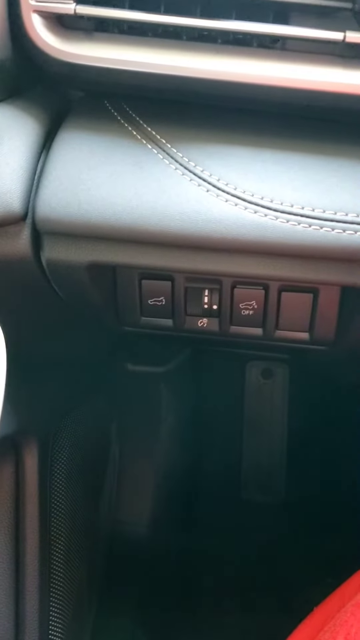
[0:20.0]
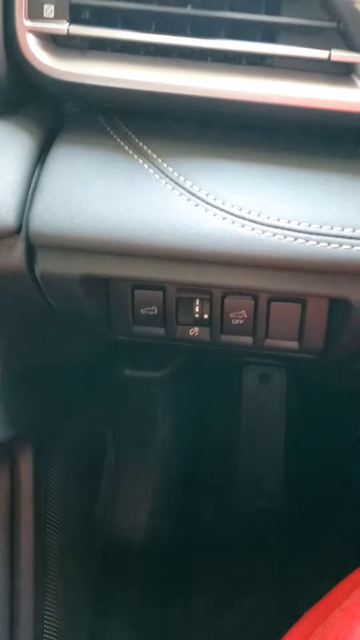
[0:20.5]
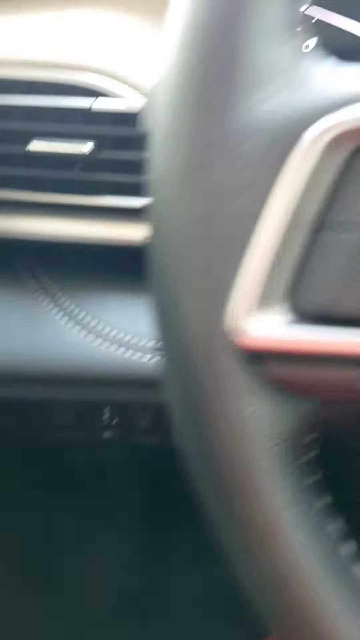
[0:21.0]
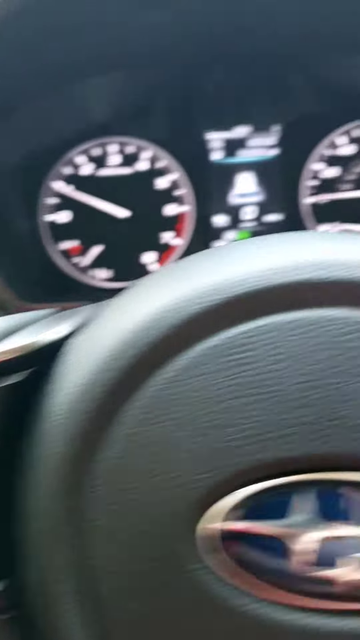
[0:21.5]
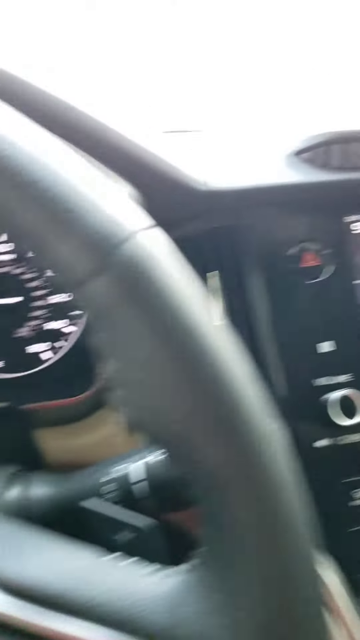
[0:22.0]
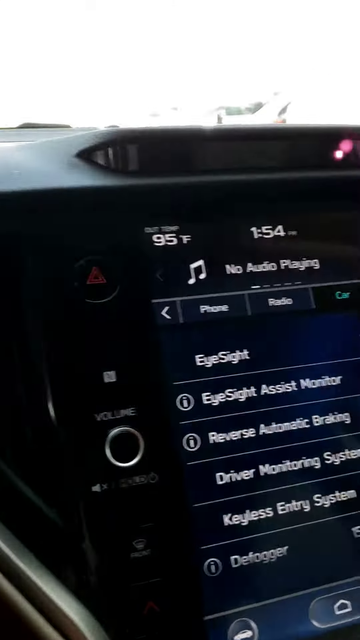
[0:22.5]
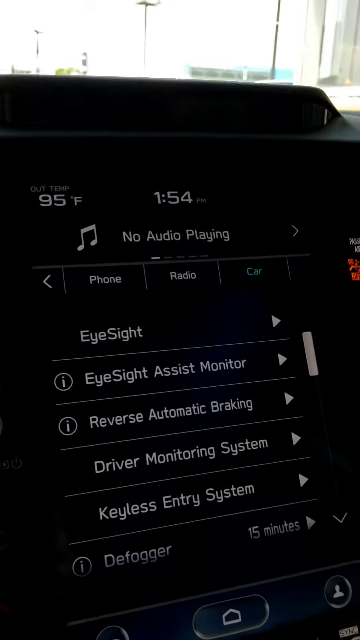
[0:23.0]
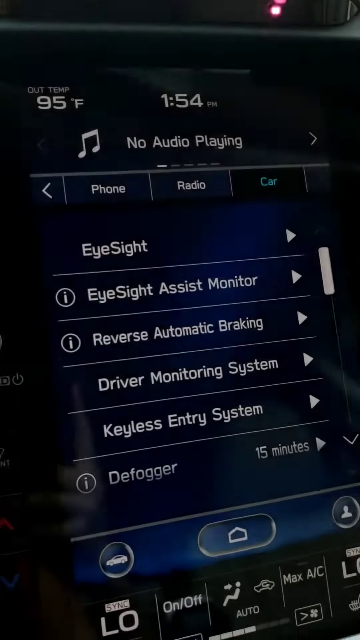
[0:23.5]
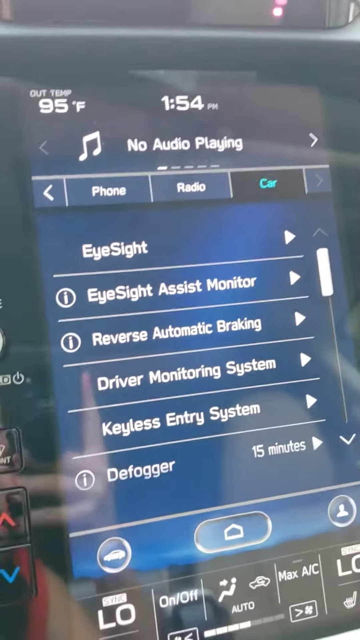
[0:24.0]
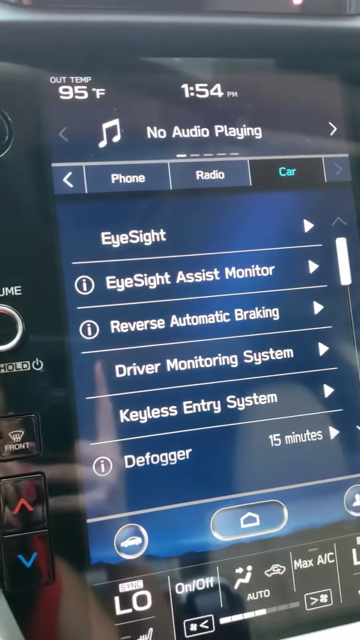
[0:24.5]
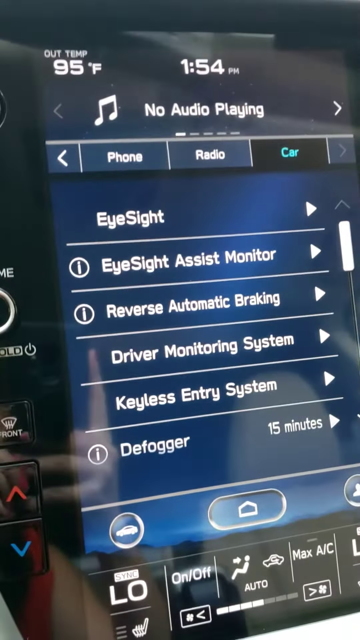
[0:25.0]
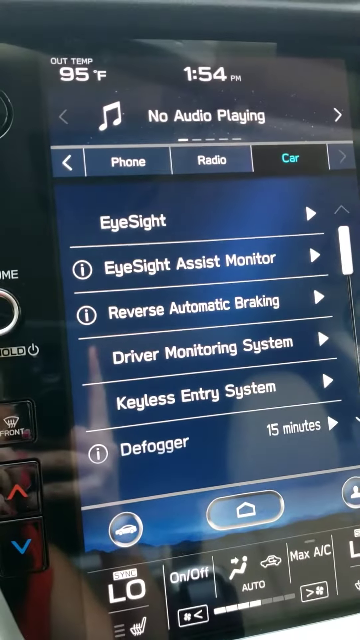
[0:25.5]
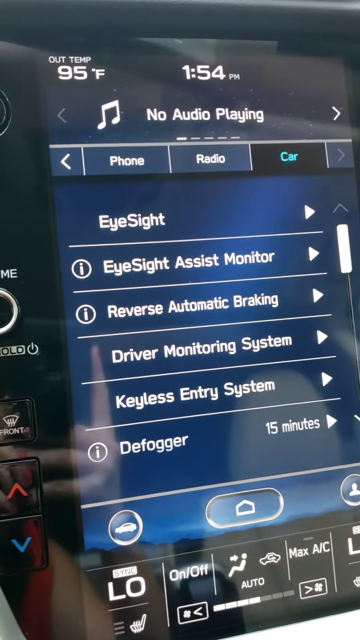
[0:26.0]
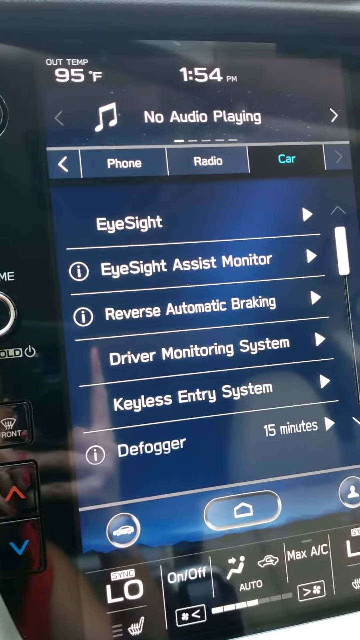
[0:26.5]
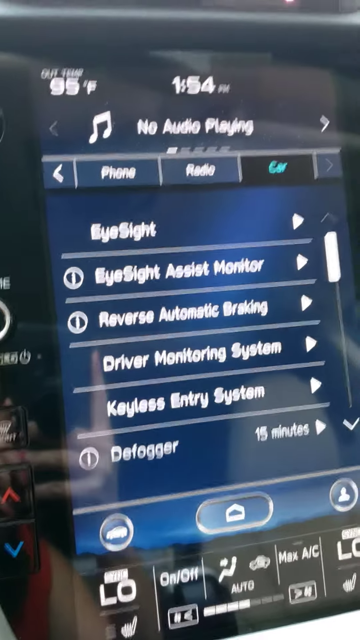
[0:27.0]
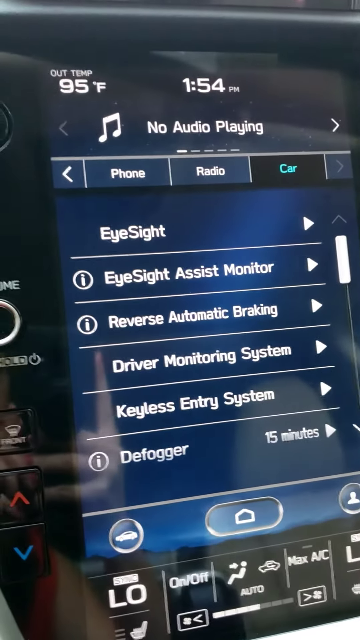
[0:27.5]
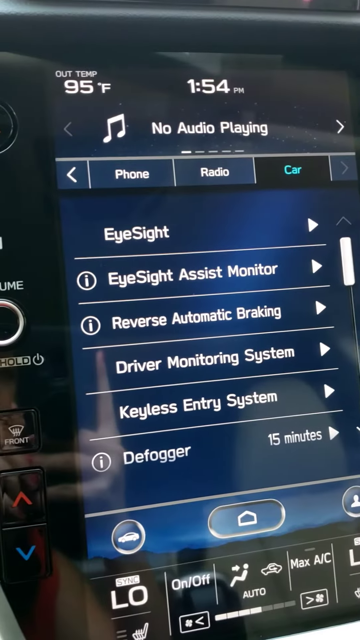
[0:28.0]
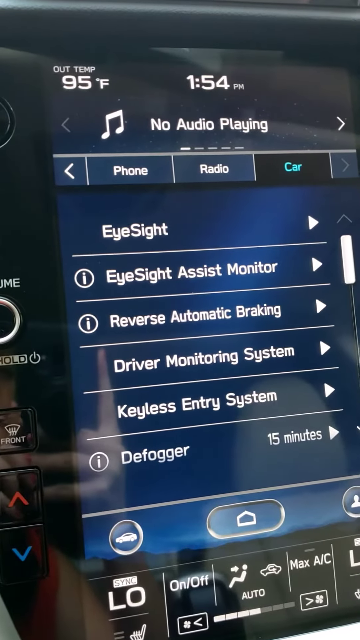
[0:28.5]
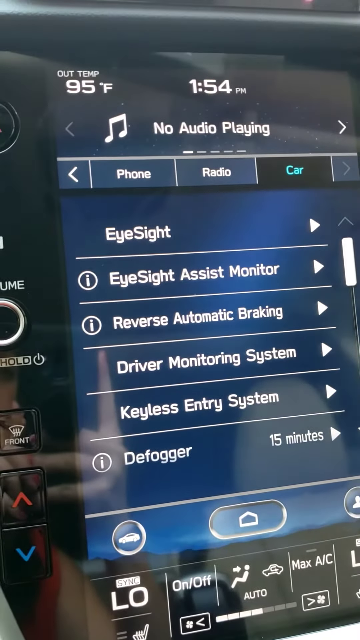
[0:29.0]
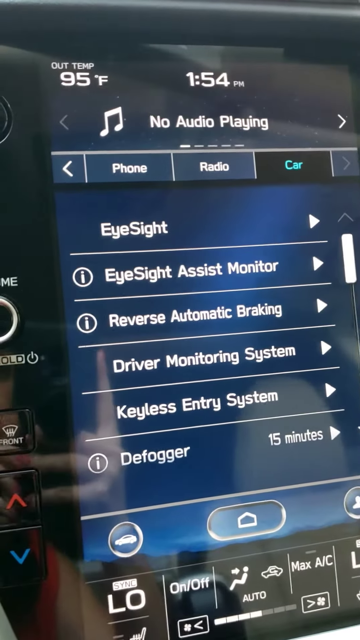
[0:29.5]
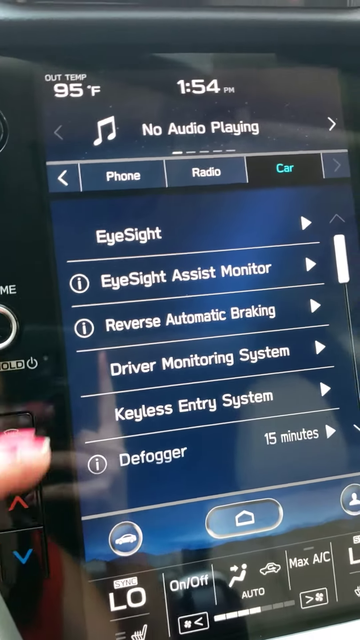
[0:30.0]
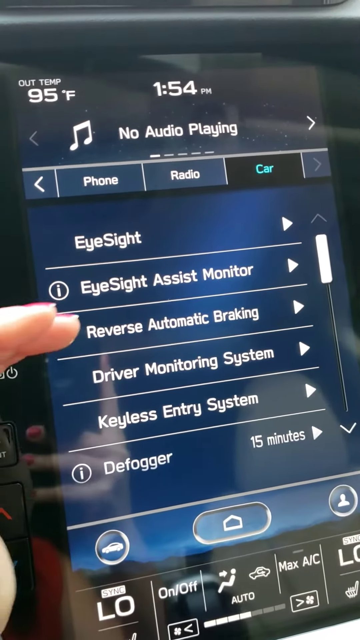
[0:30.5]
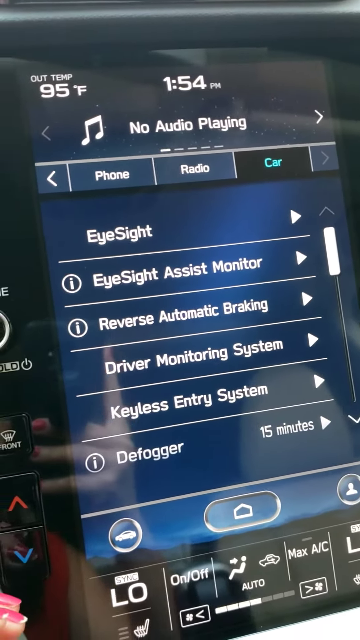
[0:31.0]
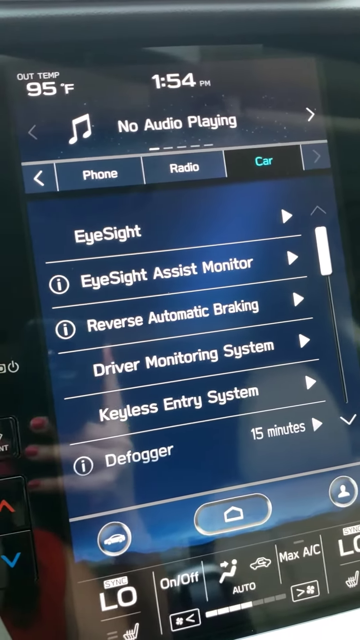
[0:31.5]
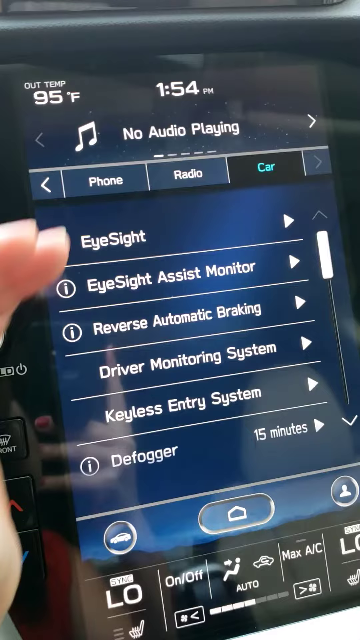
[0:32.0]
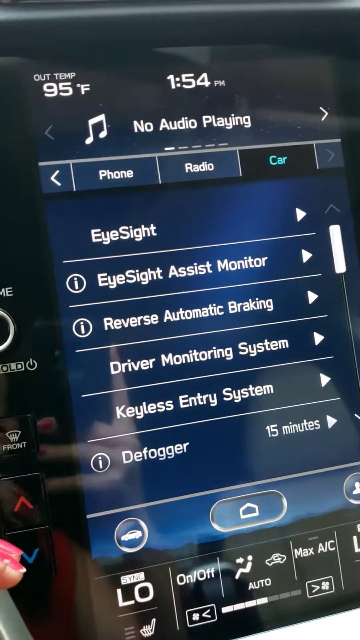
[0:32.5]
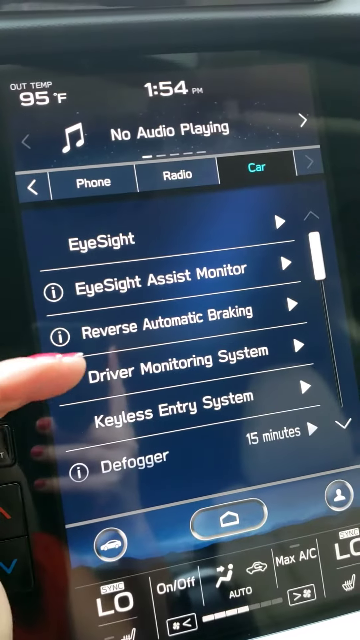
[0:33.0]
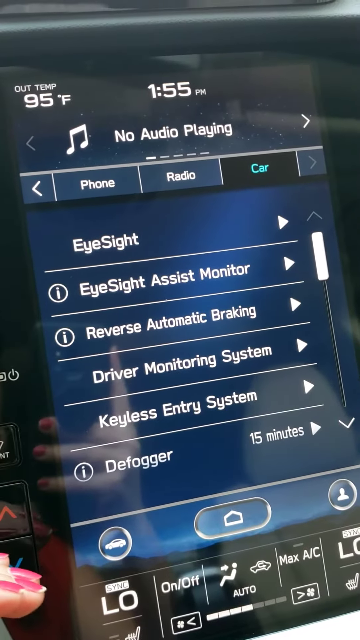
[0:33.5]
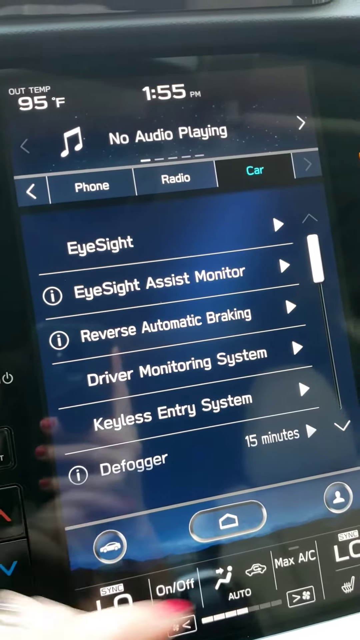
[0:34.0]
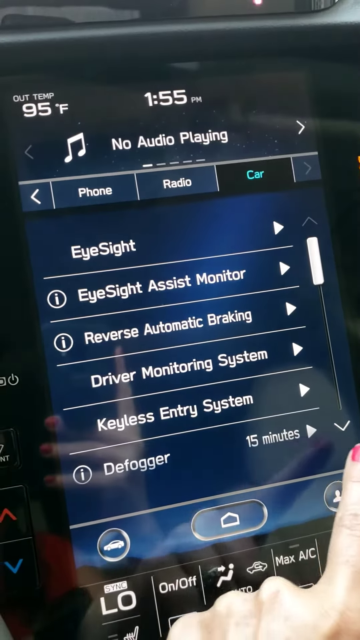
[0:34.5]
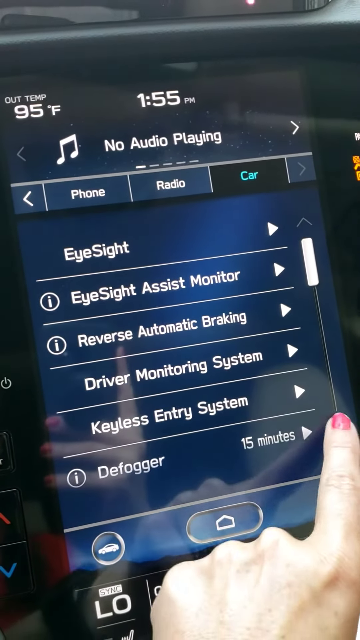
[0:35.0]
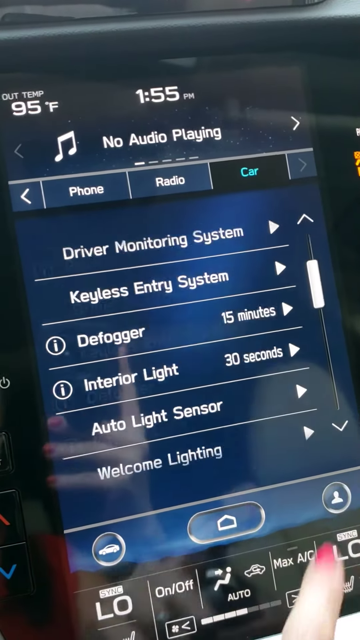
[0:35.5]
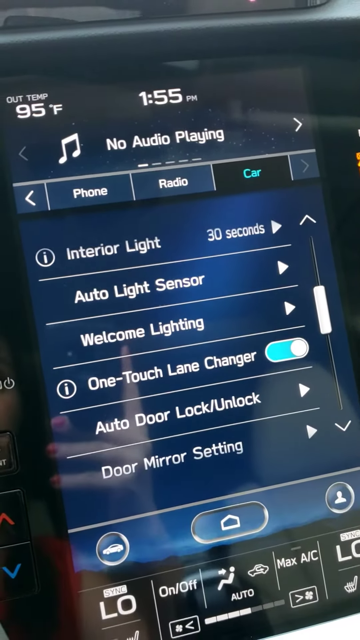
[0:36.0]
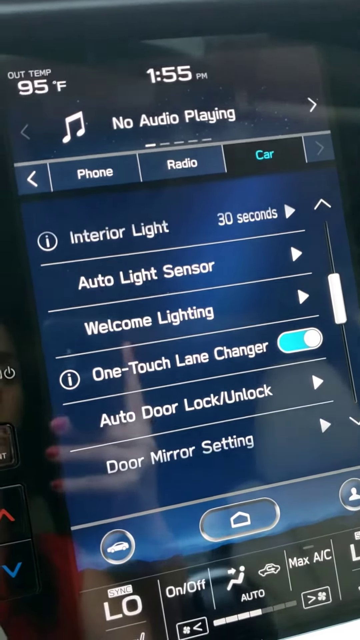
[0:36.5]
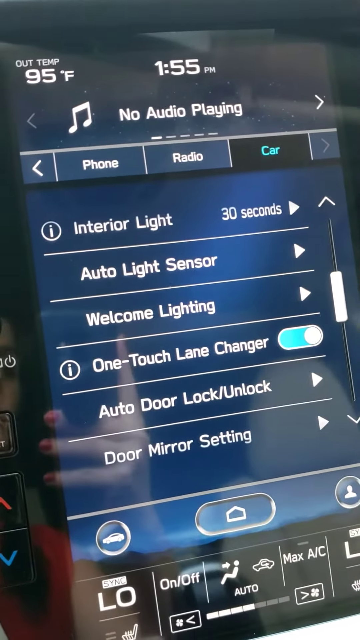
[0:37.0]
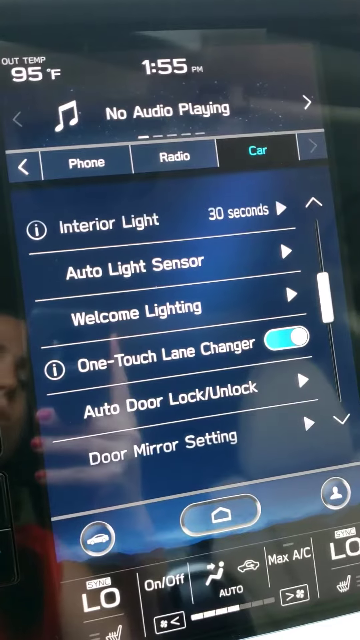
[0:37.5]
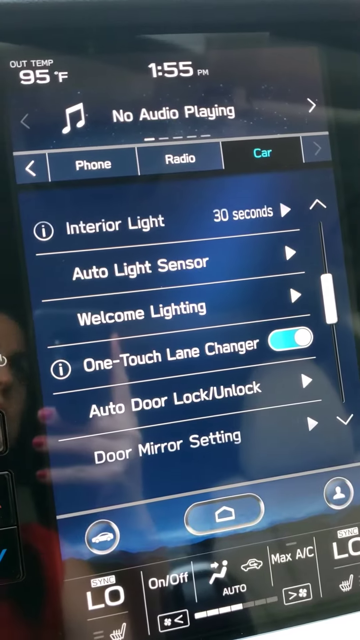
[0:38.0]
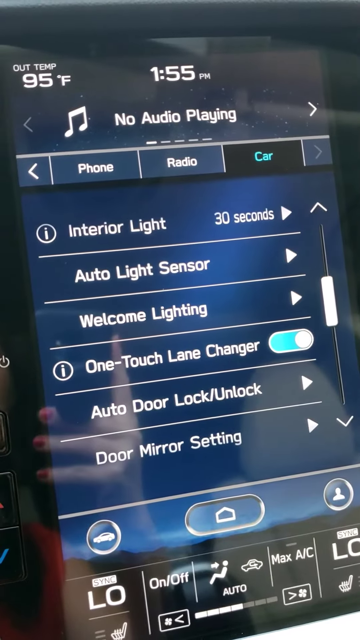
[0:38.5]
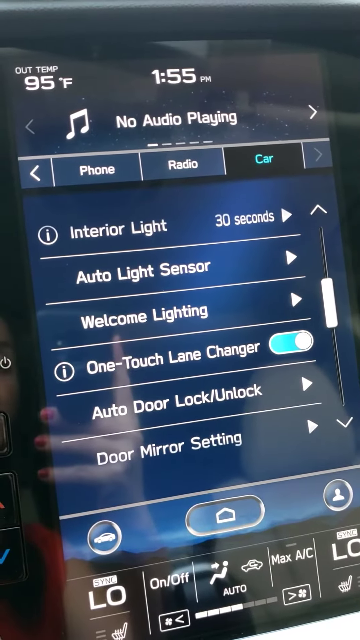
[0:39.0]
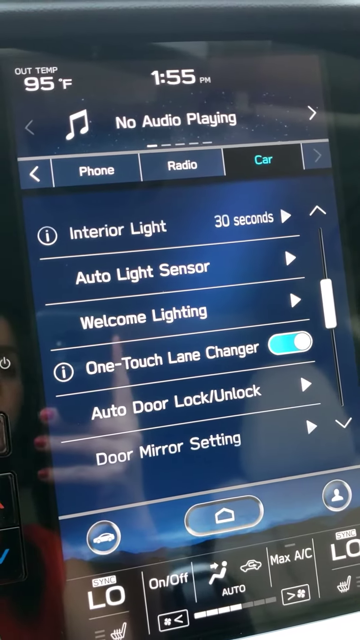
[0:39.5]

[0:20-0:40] Part of the inside of a car is shown as the camera scans the console and dashboard very fast. An EyeSight screen lists several options, including "EyeSight Assist Monitor," "Reverse Automatic Braking," "Driver Monitoring System," and "Keyless Entry System." There is a defogger option reading "15 minutes," and a woman in the car with pink nail polish pushes the 15 minutes. "One-Touch Lane Changer" comes up, and she hits it. Controls on the very bottom left side of the car are then shown. She is holding something in her right hand while pushing with her left; her reflection shows her right hand clearly cupping something black.